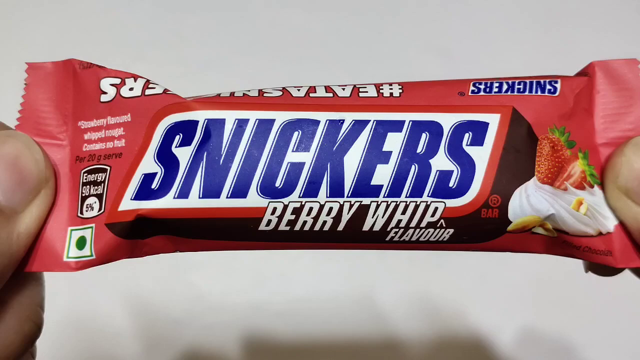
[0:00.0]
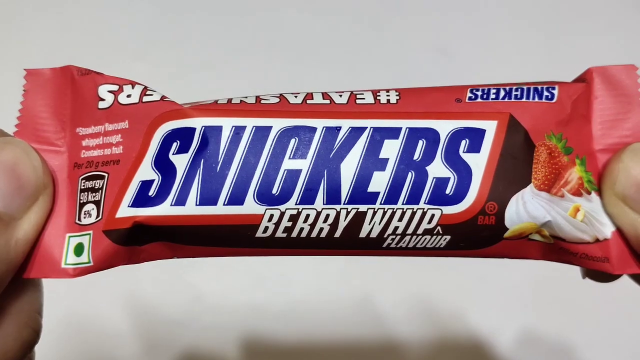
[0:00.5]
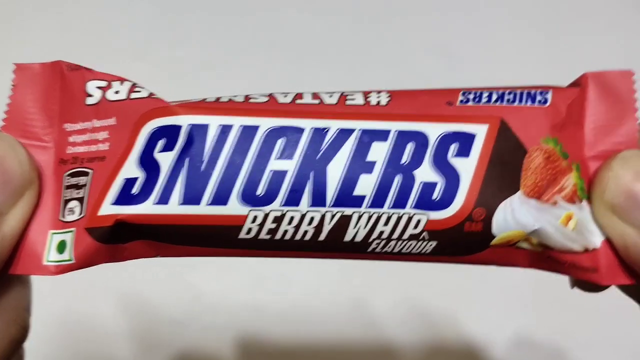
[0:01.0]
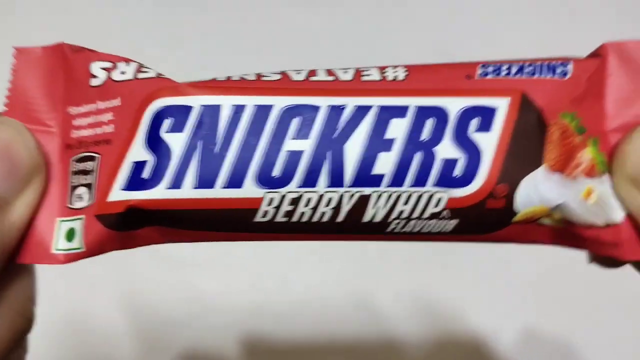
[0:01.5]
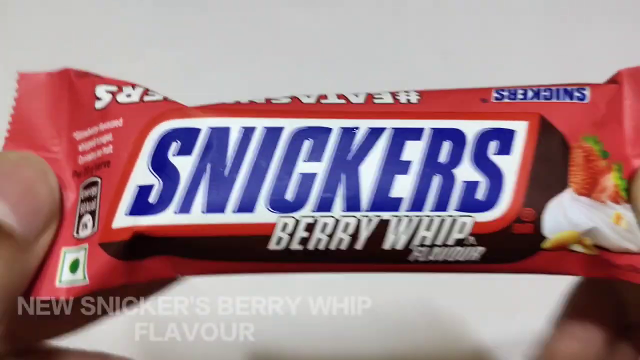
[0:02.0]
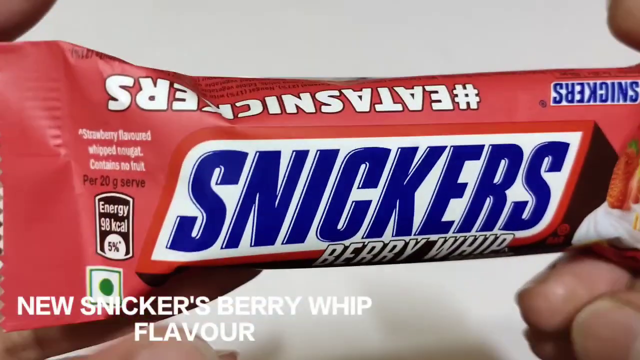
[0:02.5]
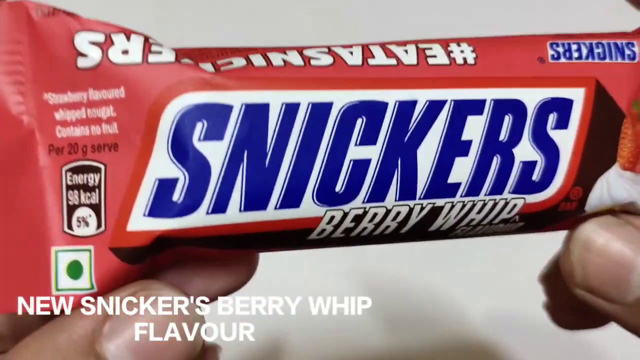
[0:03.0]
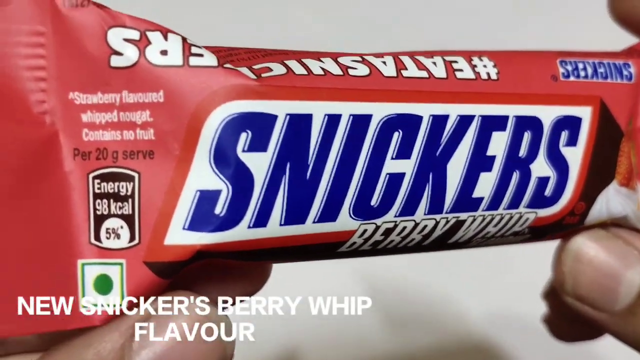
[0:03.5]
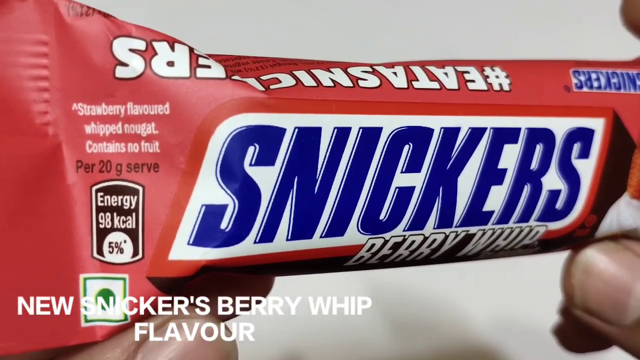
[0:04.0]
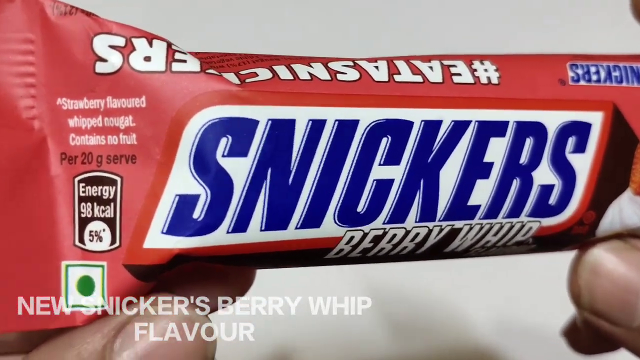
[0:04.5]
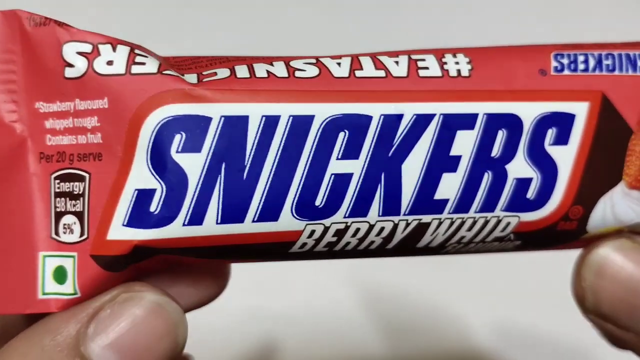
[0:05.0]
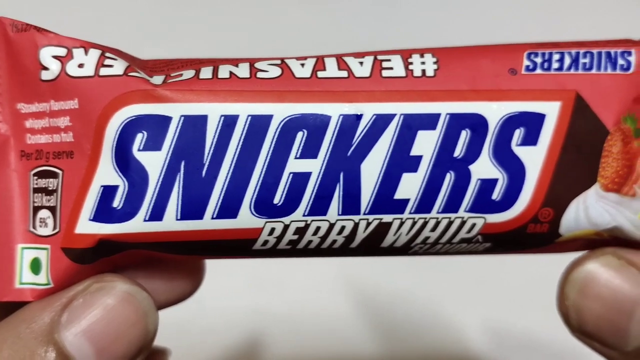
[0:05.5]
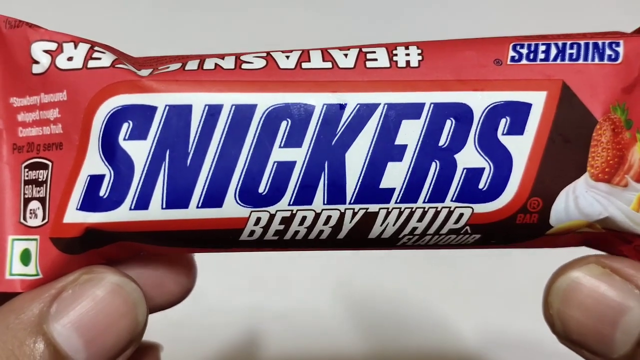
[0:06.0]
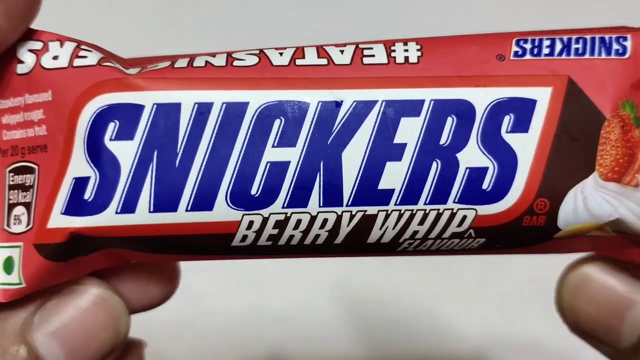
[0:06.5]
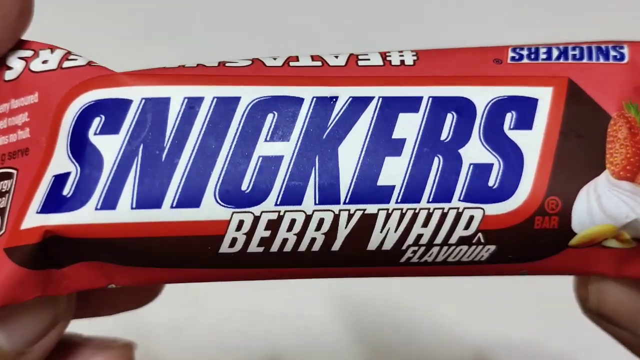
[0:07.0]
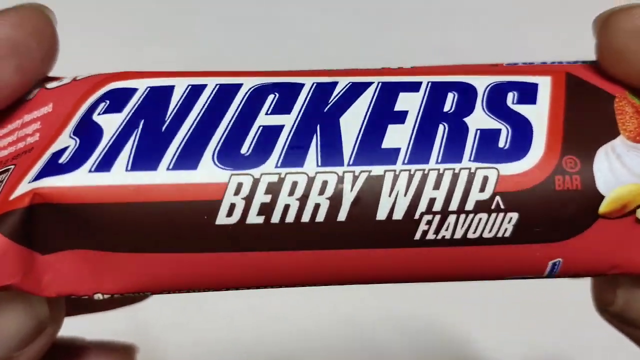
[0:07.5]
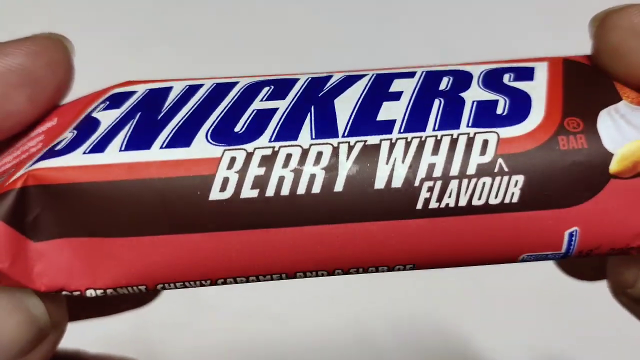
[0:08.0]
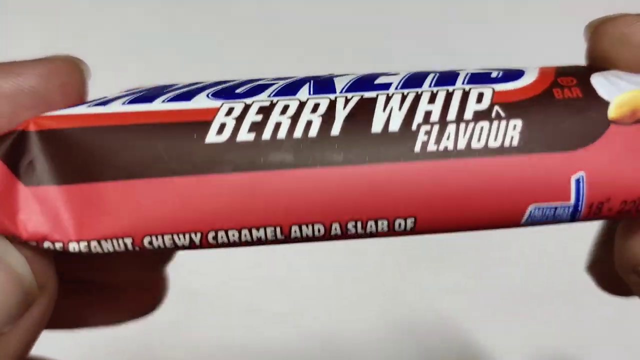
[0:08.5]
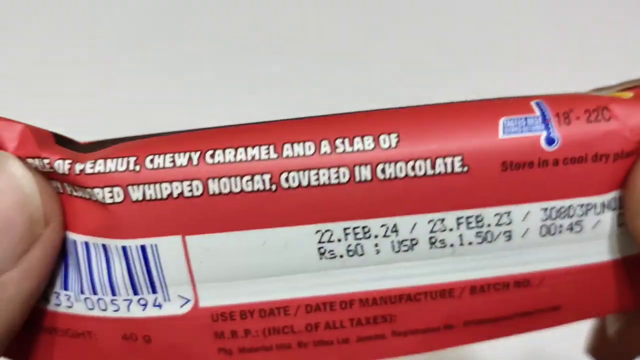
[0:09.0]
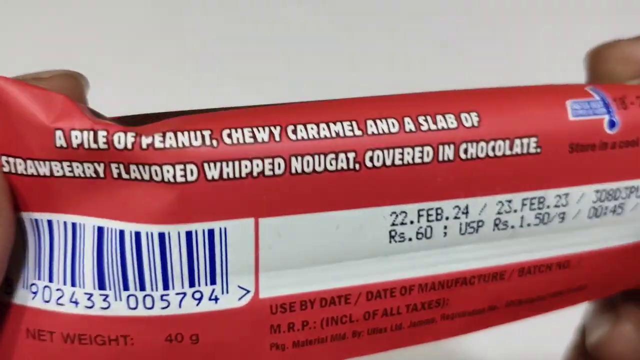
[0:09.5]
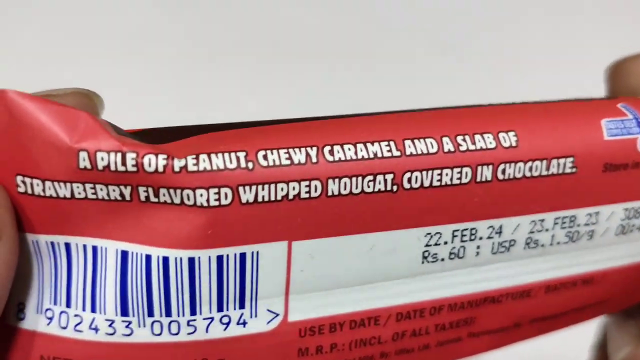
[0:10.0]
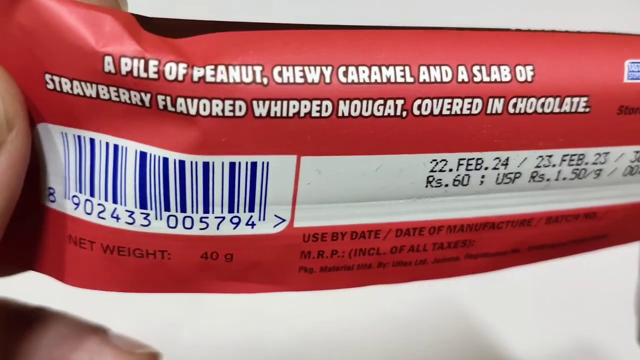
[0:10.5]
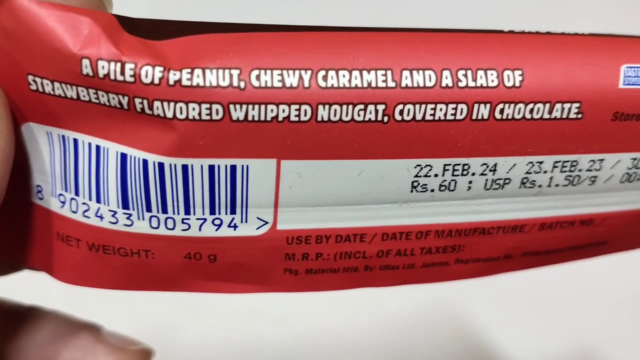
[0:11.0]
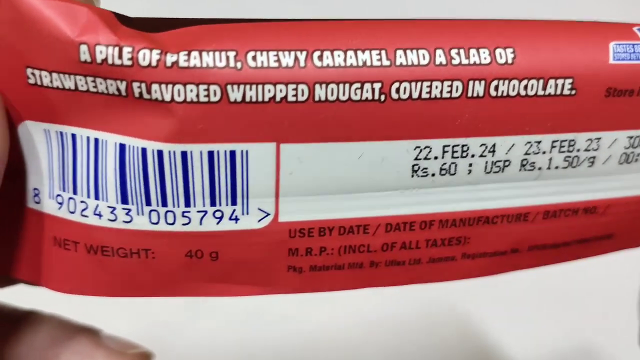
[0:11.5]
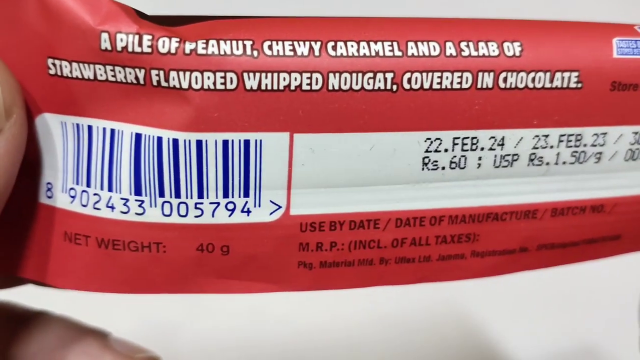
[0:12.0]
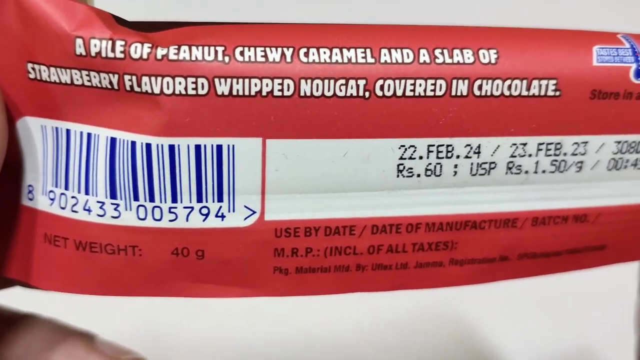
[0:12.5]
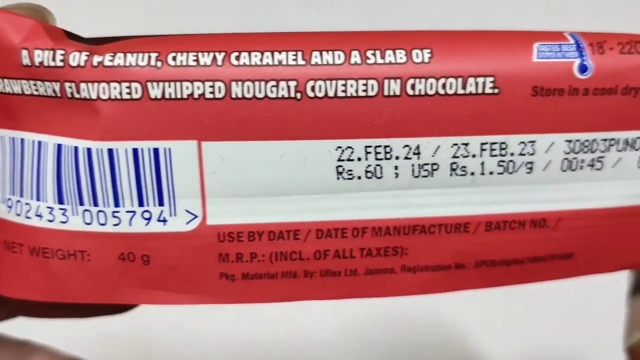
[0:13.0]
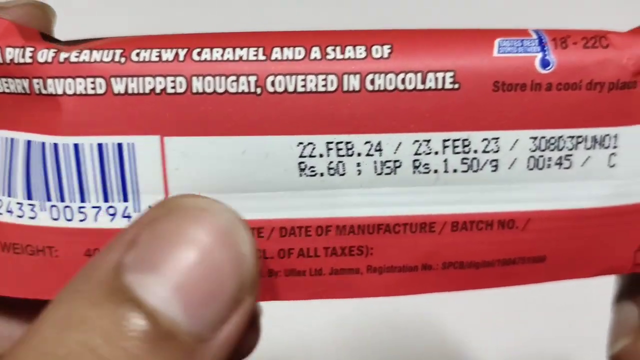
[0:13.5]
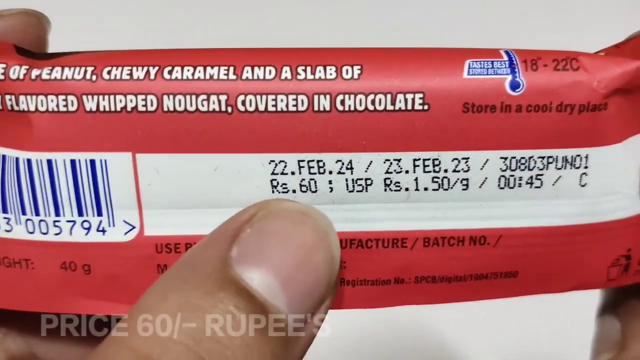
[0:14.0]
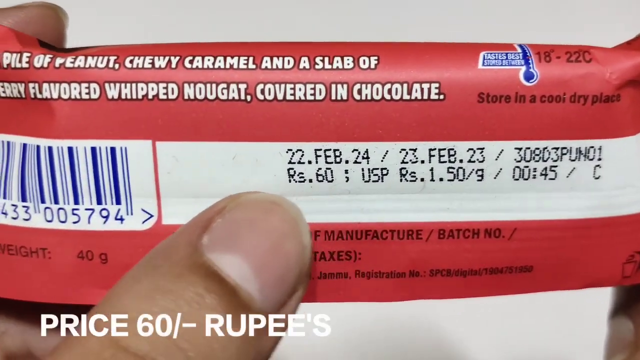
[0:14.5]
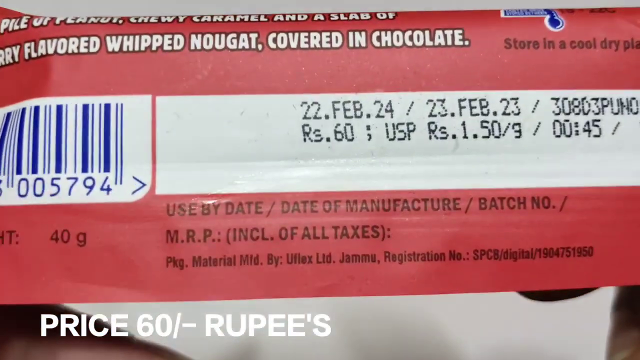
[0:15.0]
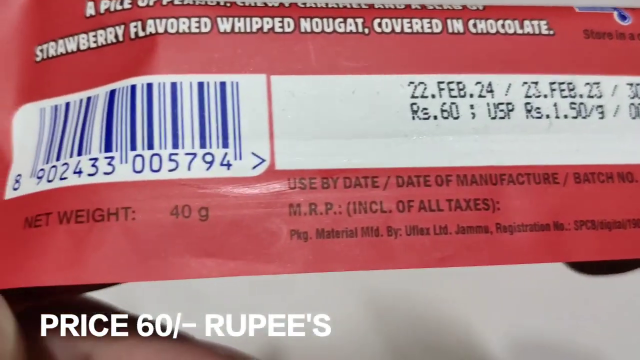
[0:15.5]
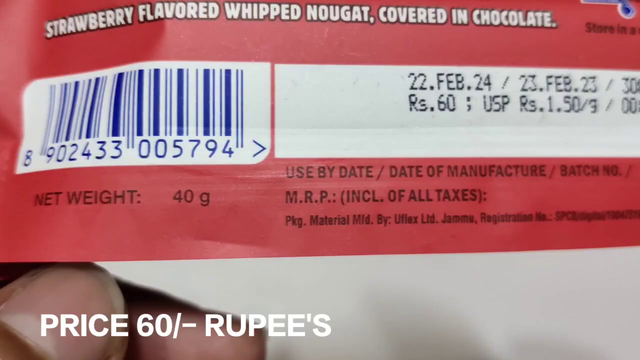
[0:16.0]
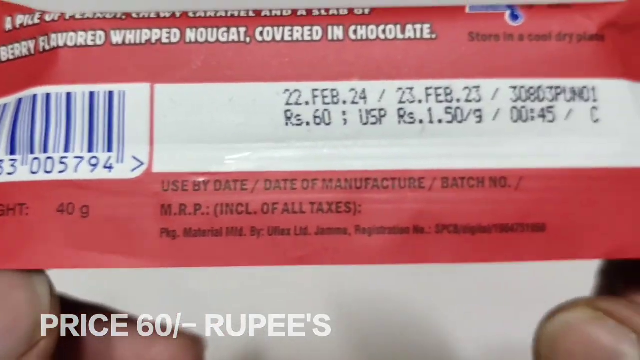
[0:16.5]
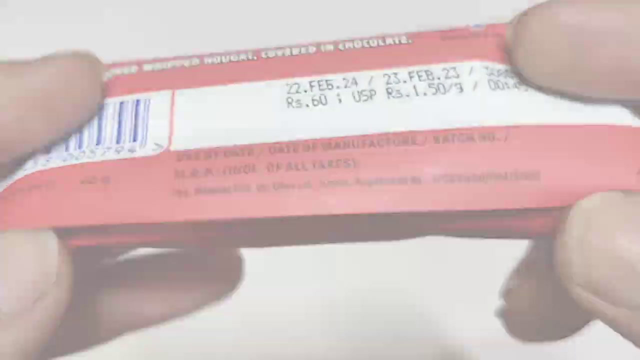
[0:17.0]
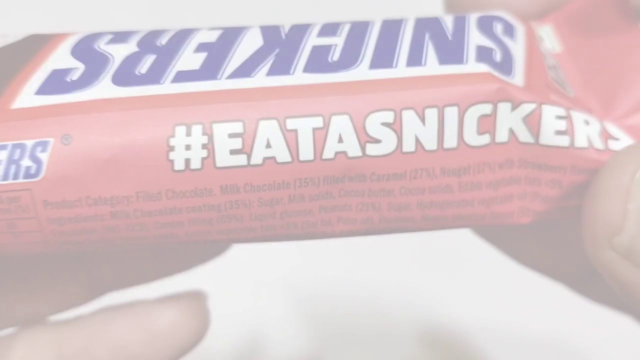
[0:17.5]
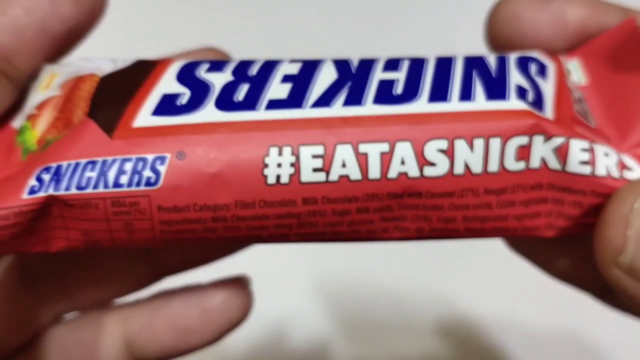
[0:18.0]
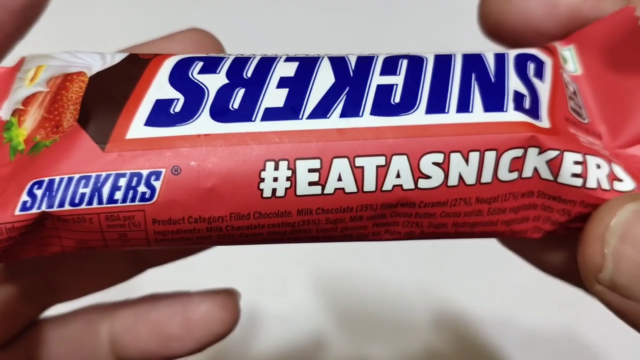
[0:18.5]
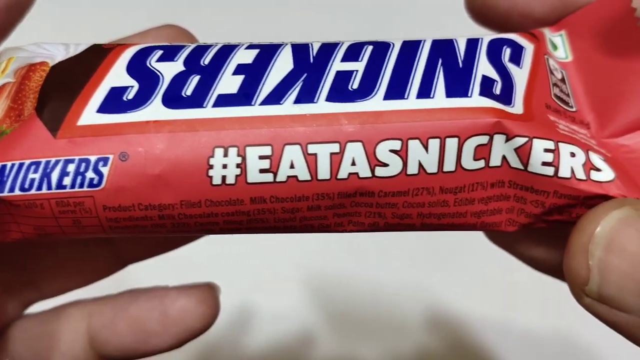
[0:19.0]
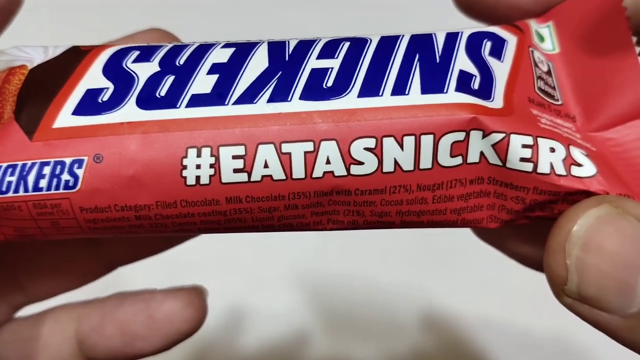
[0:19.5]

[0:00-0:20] What looks like a pair of hands holds a red Snickers bar in a close-up that zooms in on what is between the hands, so only the thumbs and part of the fingers are visible. It looks like a regular Snickers bar, but in the middle there is blue text in a white rectangle reading "Snickers", with white text underneath reading "Berry Whip". At the beginning, white text appears at the bottom left reading "new Snickers Berry Whip flavor". The hands look at the packaging, first at the front, then turn it around to the back, where white text reads "a pile of peanut chewy caramel and a slab of strawberry flavored whipped nougat covered in chocolate". The back also has a barcode, an expiration date of February 23rd 2024, and black text such as "store in a dry cool place" and "net weight 40 grams". The top of the bar is then shown, reading "## eat a Snickers". Another white text appears at the bottom left reading "price 60 rupees".